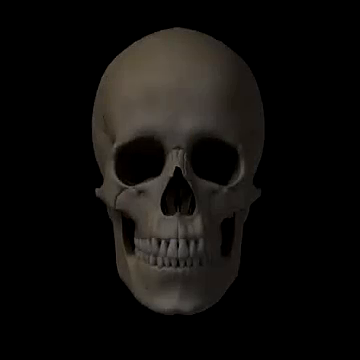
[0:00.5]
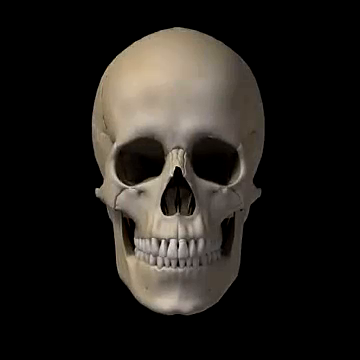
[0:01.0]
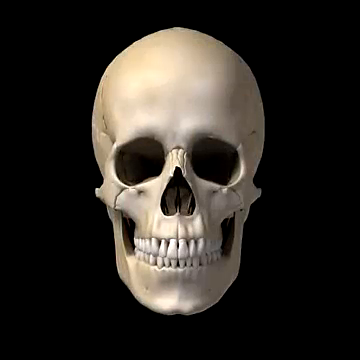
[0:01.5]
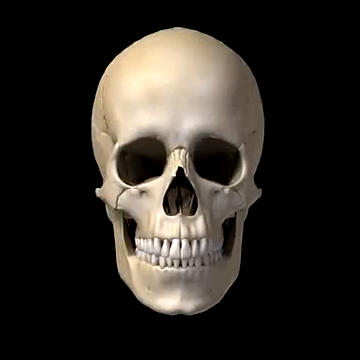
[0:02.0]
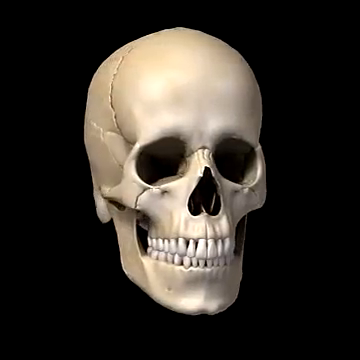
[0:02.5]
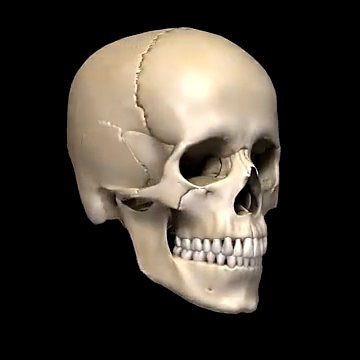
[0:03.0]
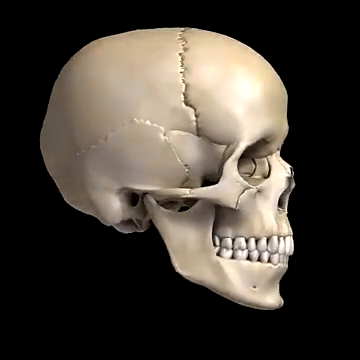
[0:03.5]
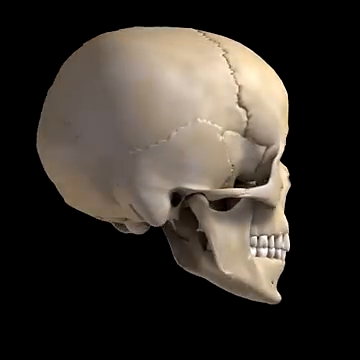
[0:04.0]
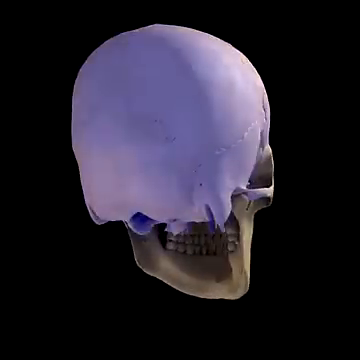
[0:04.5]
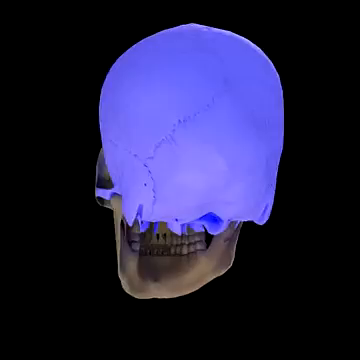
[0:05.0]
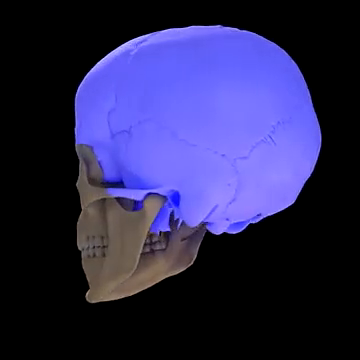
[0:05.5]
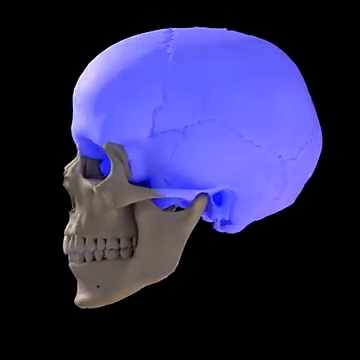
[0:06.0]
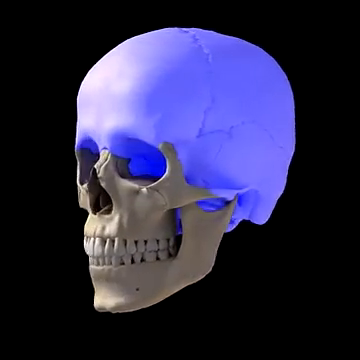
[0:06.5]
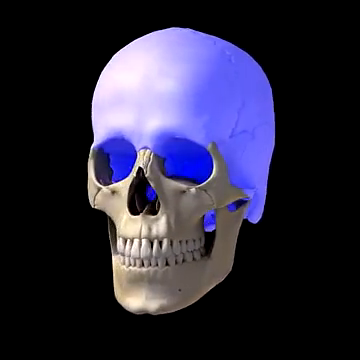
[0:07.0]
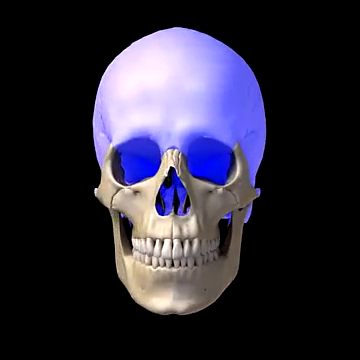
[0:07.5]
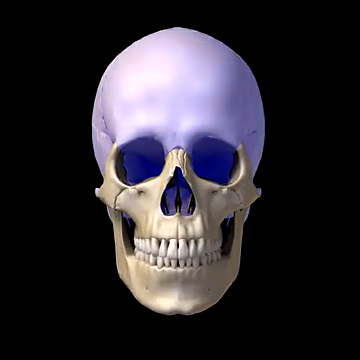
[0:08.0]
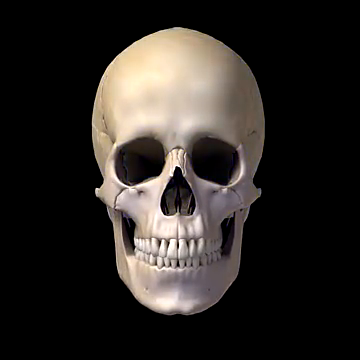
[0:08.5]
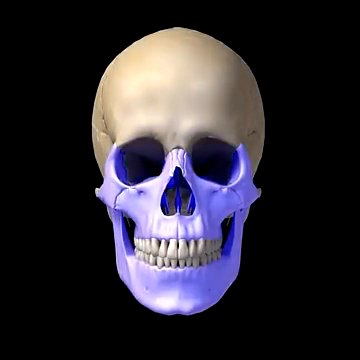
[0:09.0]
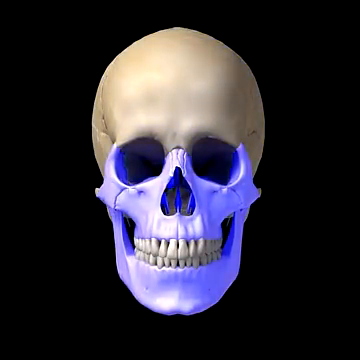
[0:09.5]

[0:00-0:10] The video opens on a blank black screen, and then a white skull appears in the center. It is a typical skull, and it takes up most of the middle of the frame, almost reaching the top and bottom. The animation begins and the skull quickly rotates to the viewer's right, becoming a little brighter. As it turns, the back of the skull becomes light purple, then quickly darker, then light purple and some white again as it stops, ending up facing the camera.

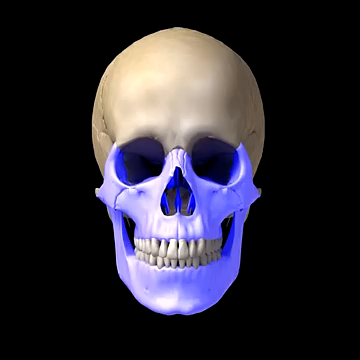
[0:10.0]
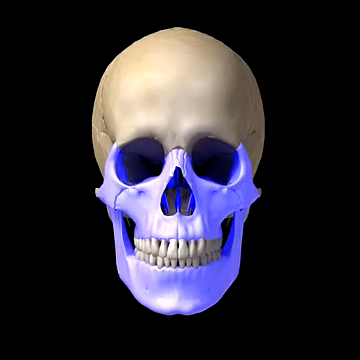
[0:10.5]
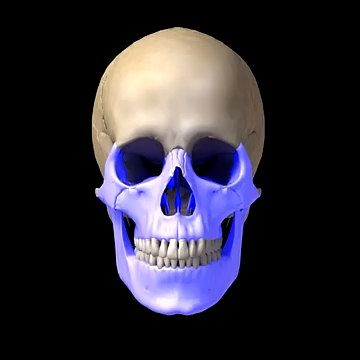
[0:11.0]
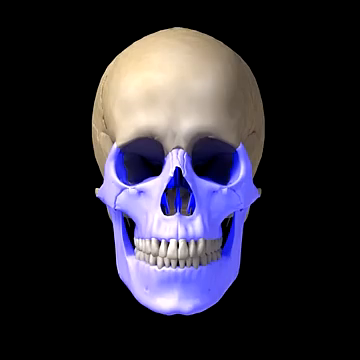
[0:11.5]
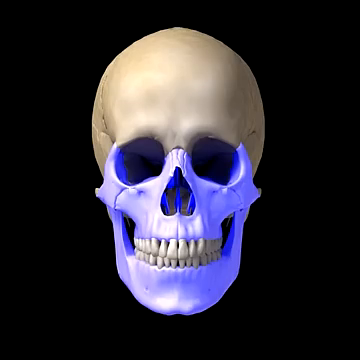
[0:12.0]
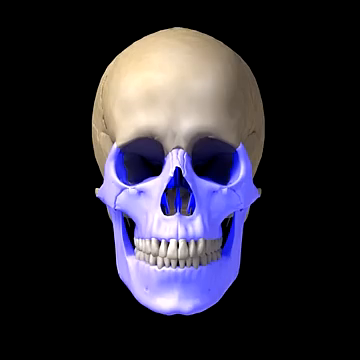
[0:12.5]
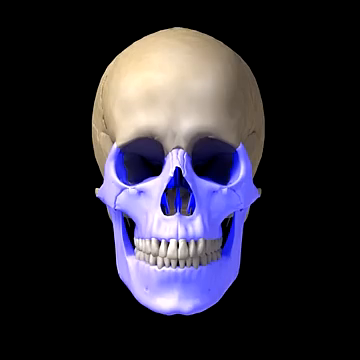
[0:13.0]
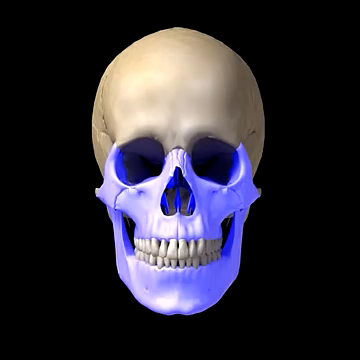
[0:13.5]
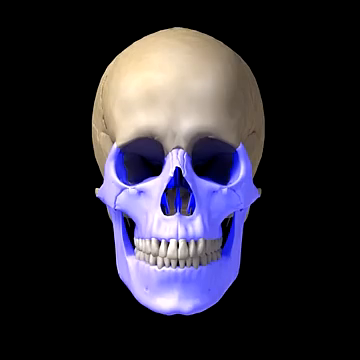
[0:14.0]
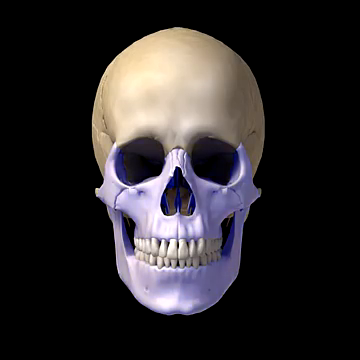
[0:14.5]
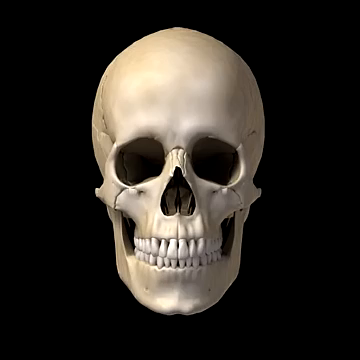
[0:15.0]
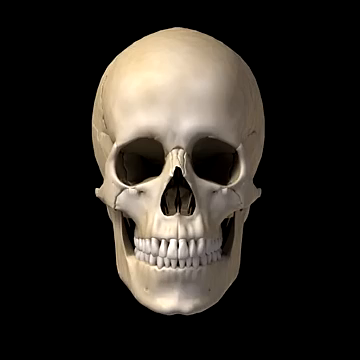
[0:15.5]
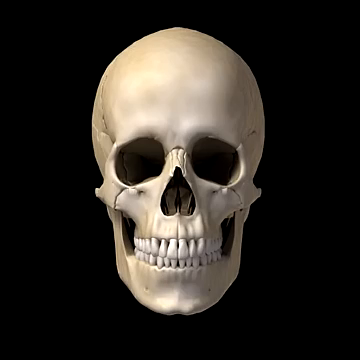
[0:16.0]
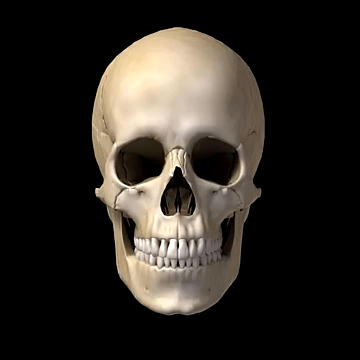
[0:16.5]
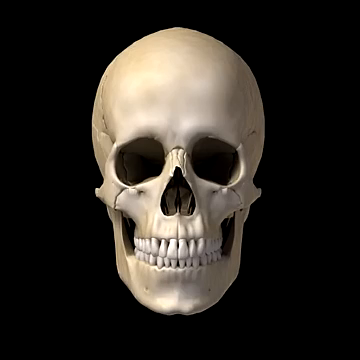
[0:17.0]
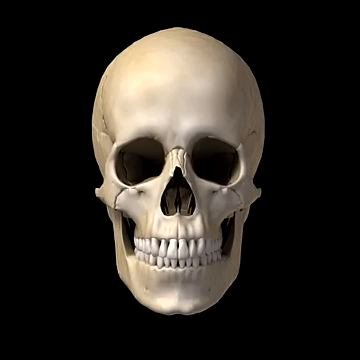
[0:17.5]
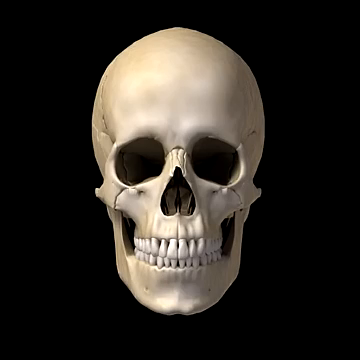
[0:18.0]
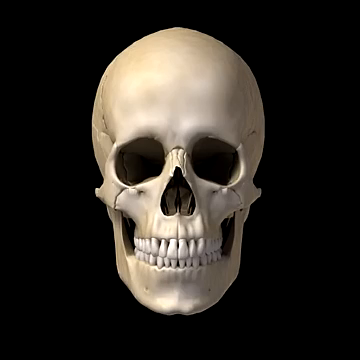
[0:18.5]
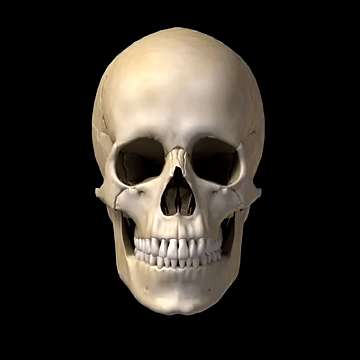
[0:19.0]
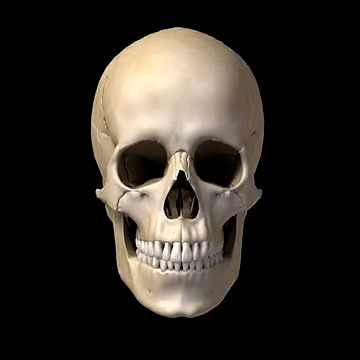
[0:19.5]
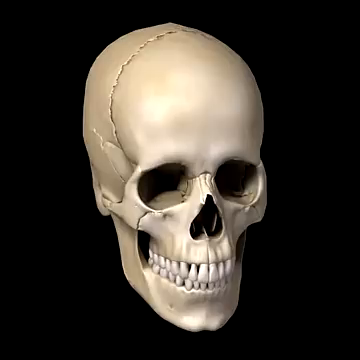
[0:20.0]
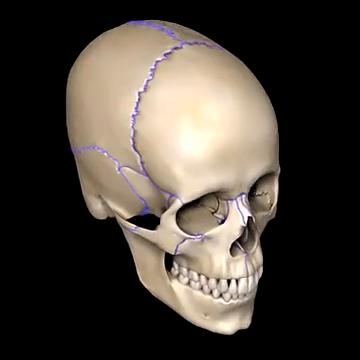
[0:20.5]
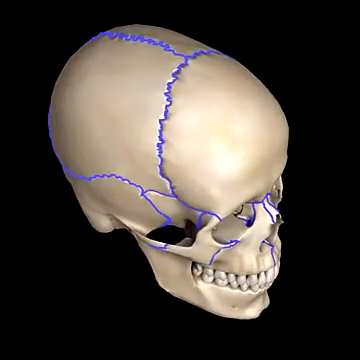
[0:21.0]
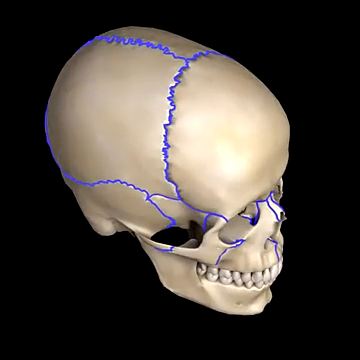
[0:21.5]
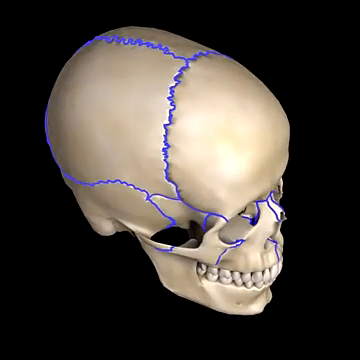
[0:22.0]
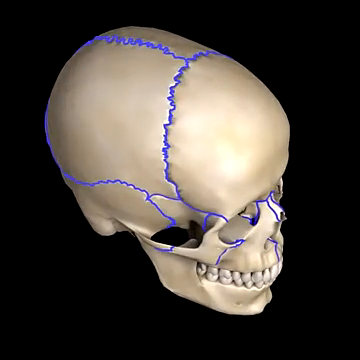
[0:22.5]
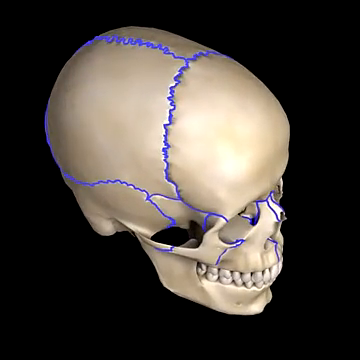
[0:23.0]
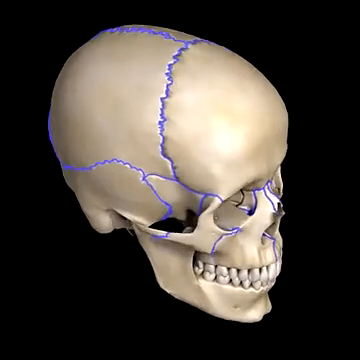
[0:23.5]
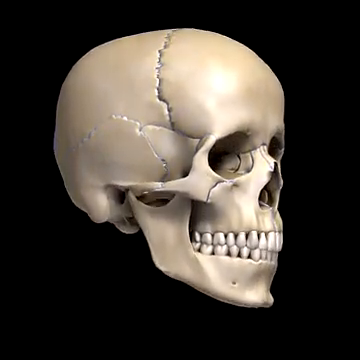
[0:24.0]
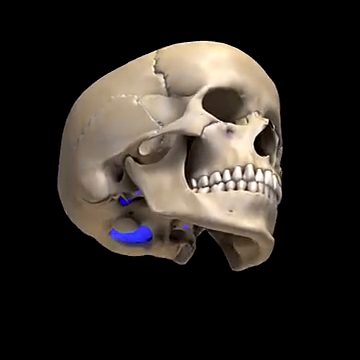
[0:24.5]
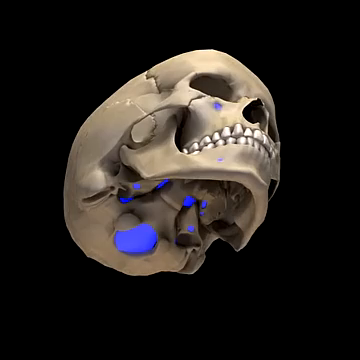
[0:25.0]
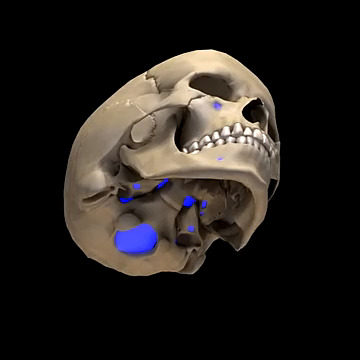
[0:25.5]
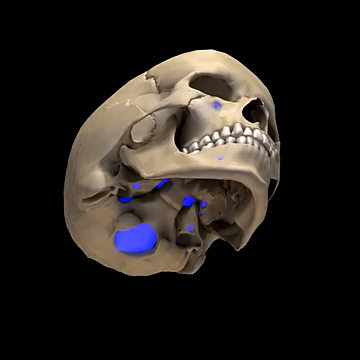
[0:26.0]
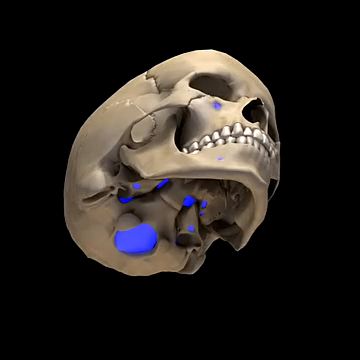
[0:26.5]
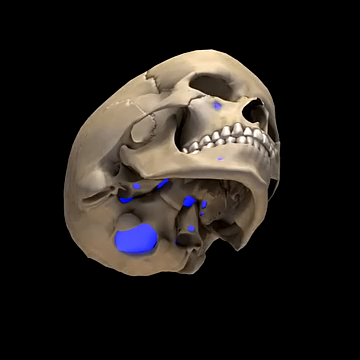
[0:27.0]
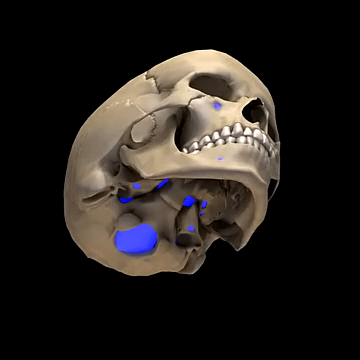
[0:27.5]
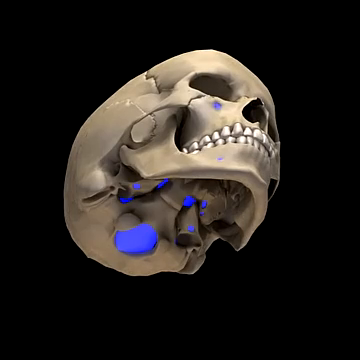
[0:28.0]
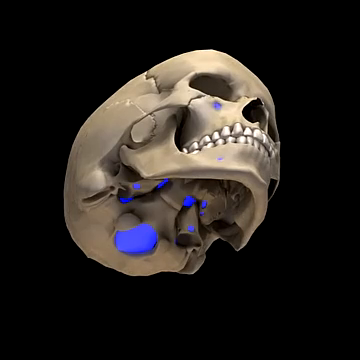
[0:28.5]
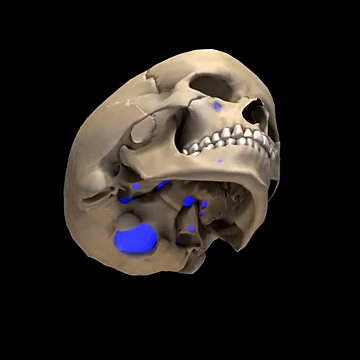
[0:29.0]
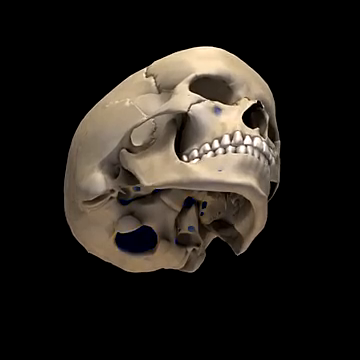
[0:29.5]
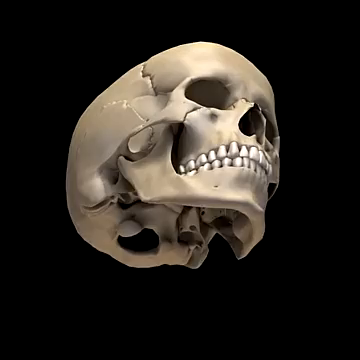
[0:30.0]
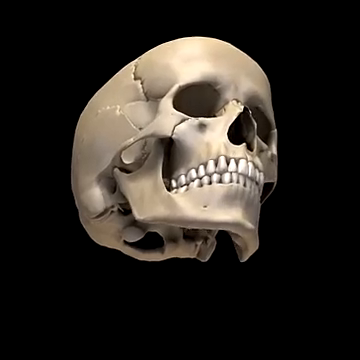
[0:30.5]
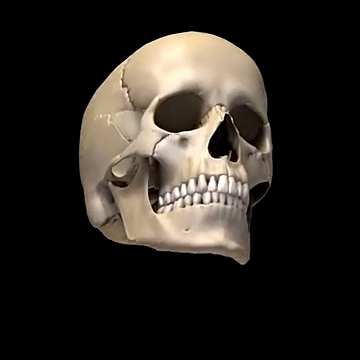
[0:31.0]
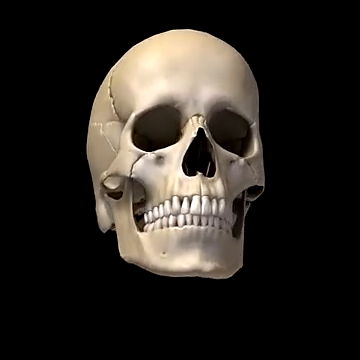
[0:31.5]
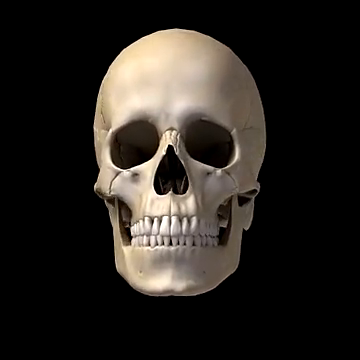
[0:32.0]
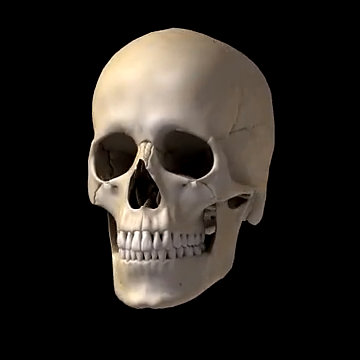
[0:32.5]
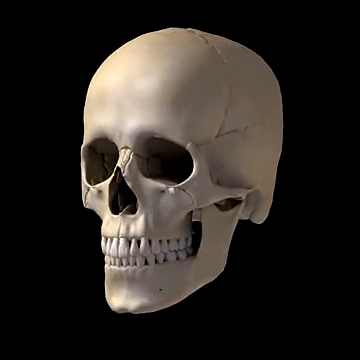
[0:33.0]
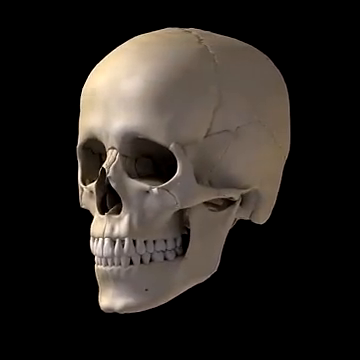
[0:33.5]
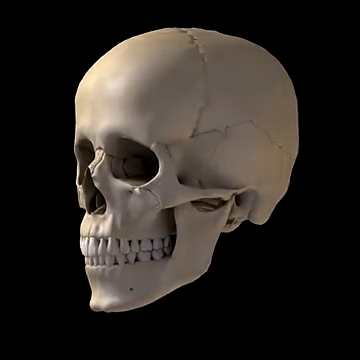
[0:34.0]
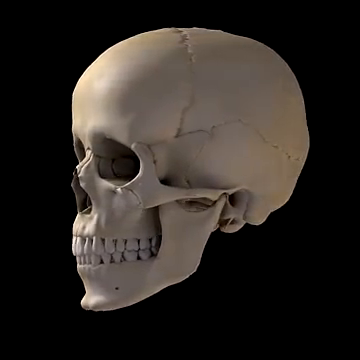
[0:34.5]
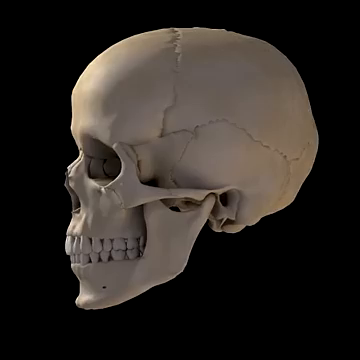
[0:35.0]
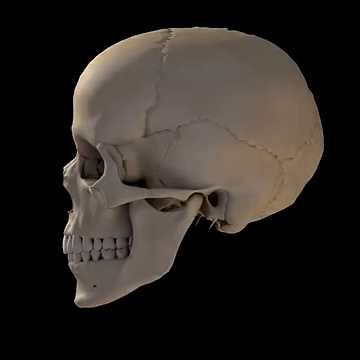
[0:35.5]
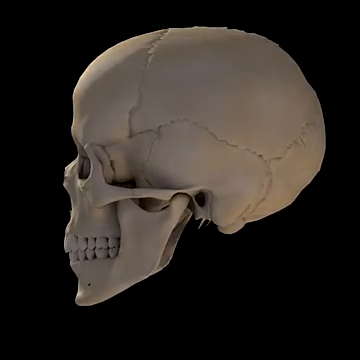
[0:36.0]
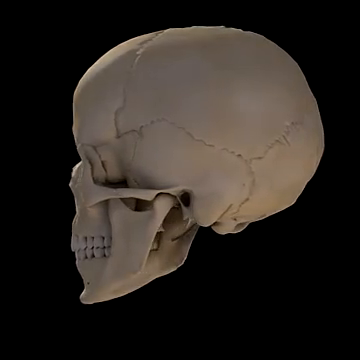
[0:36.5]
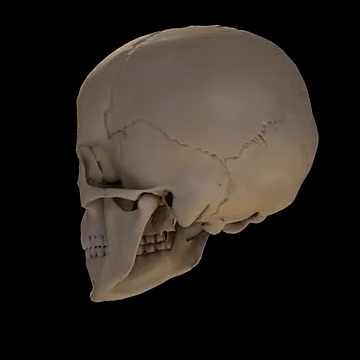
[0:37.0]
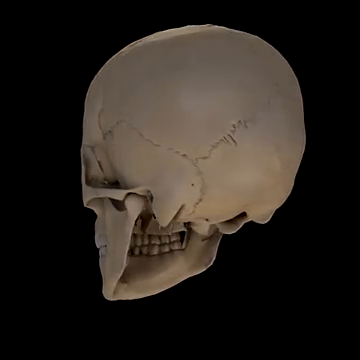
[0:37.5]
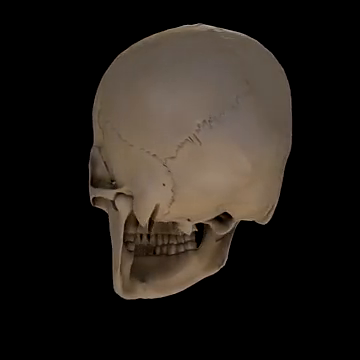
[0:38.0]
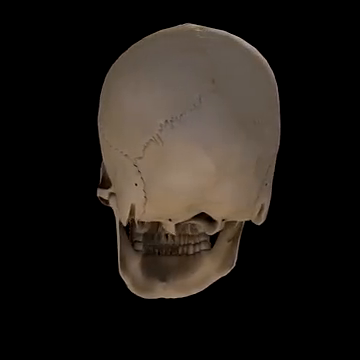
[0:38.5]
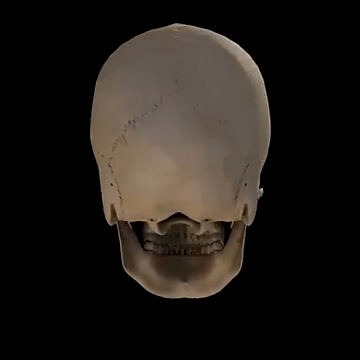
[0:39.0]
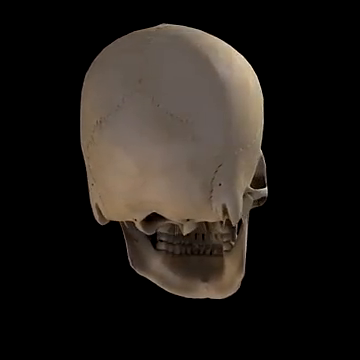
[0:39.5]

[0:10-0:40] A white skull fills most of the center of the frame against a black background. Suddenly the bottom two-thirds of the skull, from the eye sockets down to the bottom, turns light purple, while the teeth stay white. The purple then disappears and the skull is all white again. The skull then looks down to the viewer's right, as if looking at something on the floor, its head tilting down to its left, and all of the joints in the skull have turned purple so they can be seen better. The skull moves up and then down again, this time to its right (the viewer's left), ending tilted down so that the underside of the skull is visible, with the joints underneath highlighted in purple. The skull then animates back up to face the camera as it did at the beginning. All of the colors return to normal white, and the skull begins slowly rotating 360 degrees to the viewer's left.